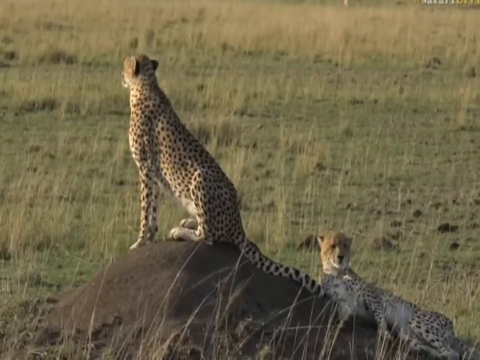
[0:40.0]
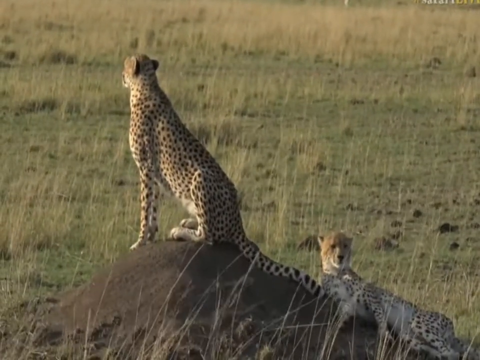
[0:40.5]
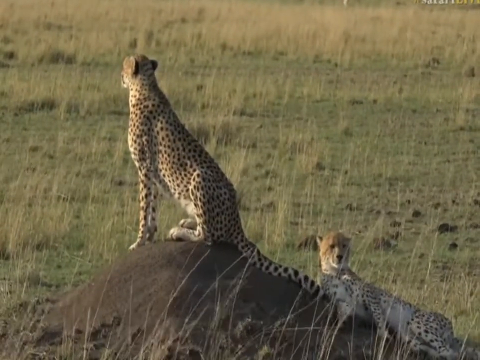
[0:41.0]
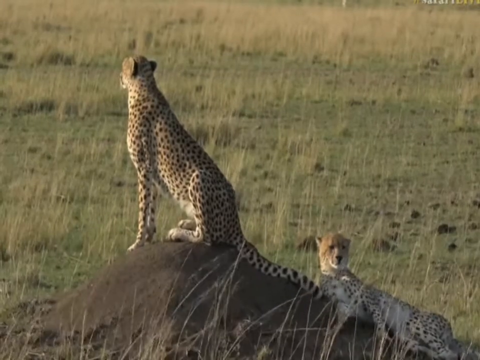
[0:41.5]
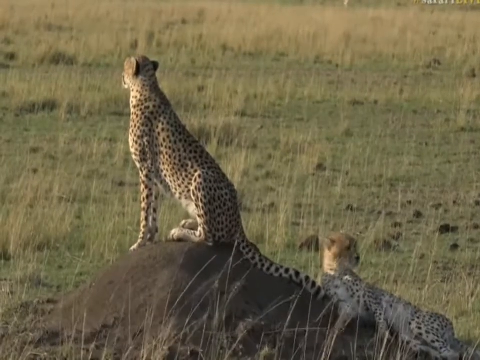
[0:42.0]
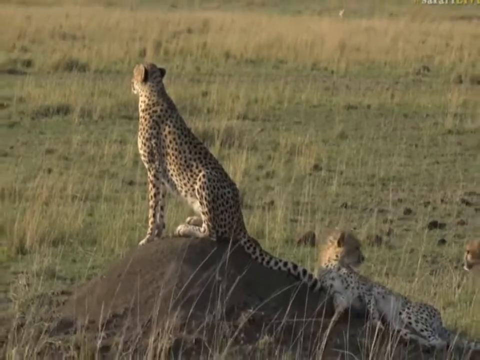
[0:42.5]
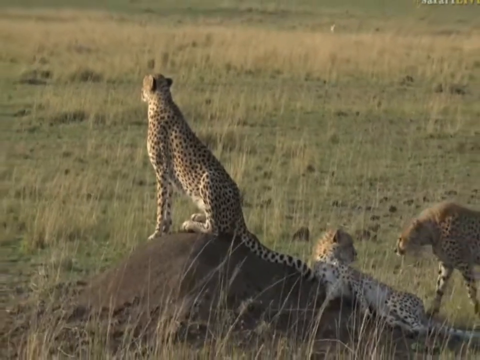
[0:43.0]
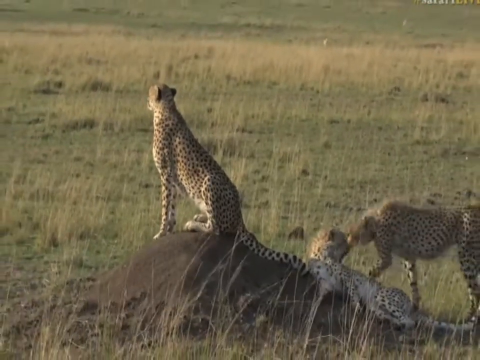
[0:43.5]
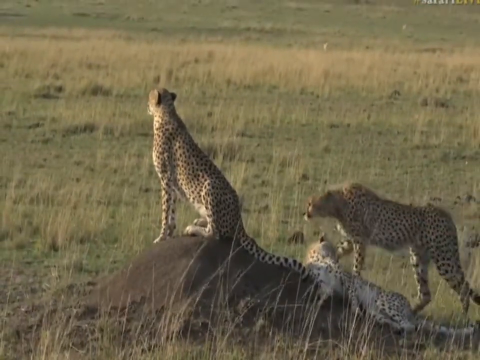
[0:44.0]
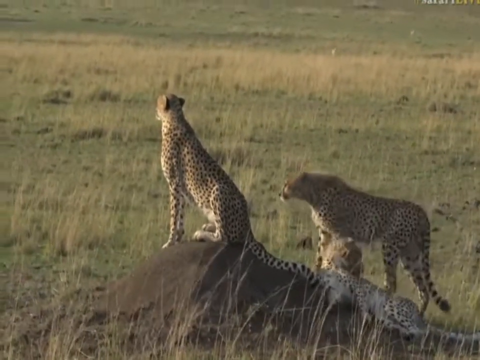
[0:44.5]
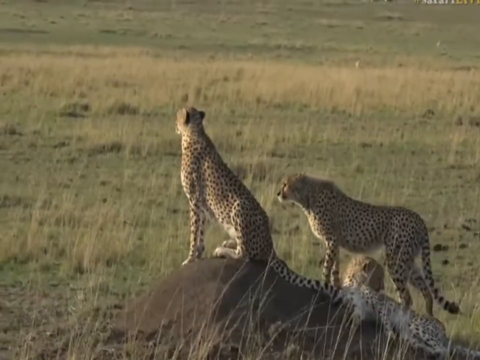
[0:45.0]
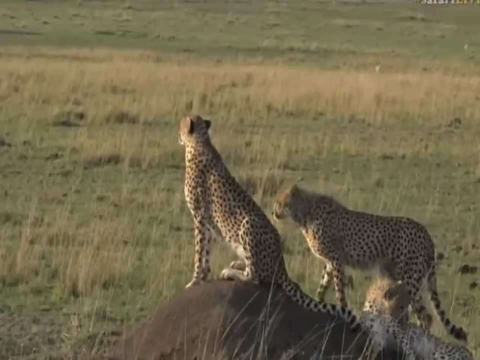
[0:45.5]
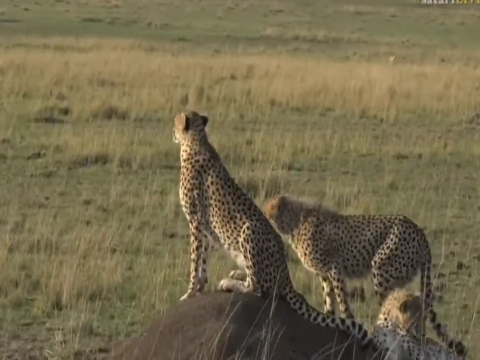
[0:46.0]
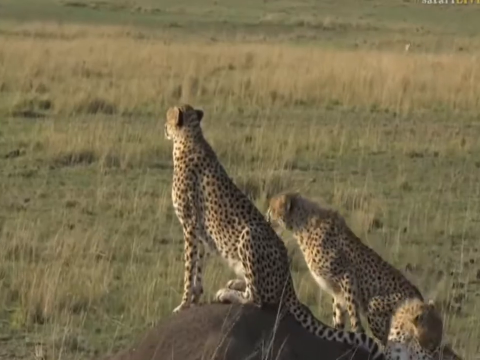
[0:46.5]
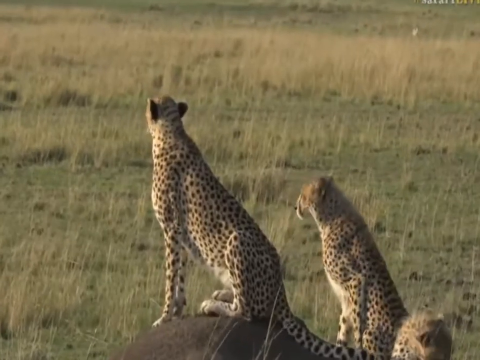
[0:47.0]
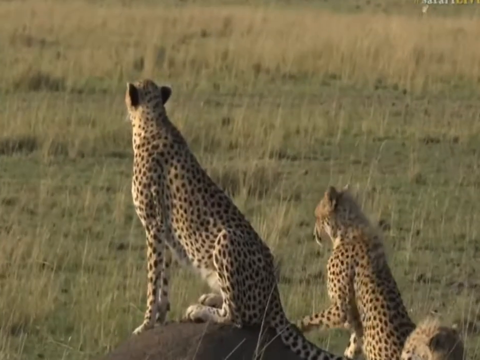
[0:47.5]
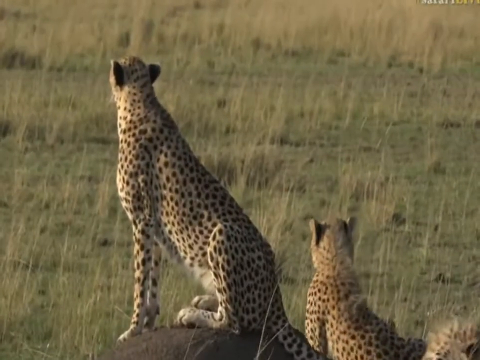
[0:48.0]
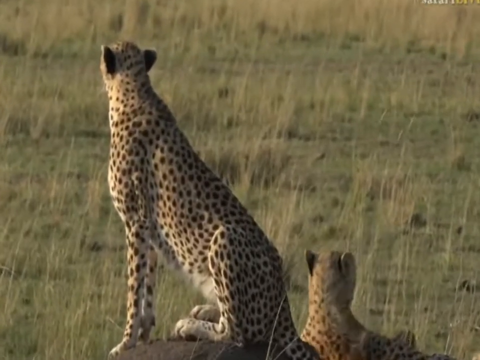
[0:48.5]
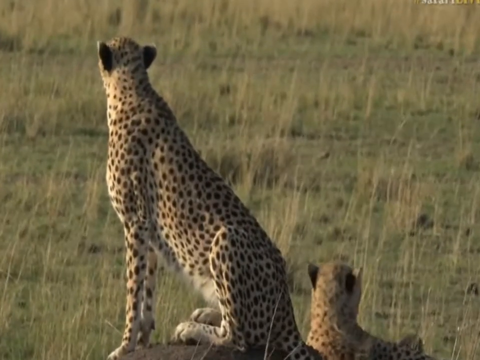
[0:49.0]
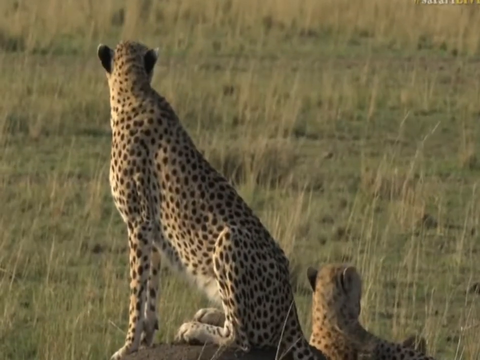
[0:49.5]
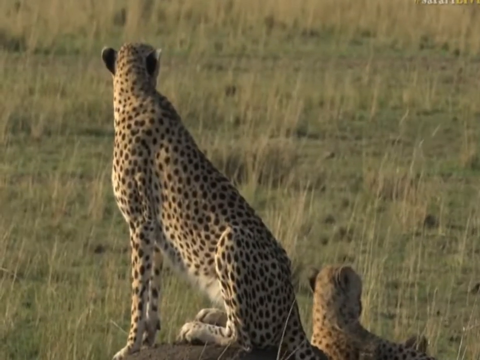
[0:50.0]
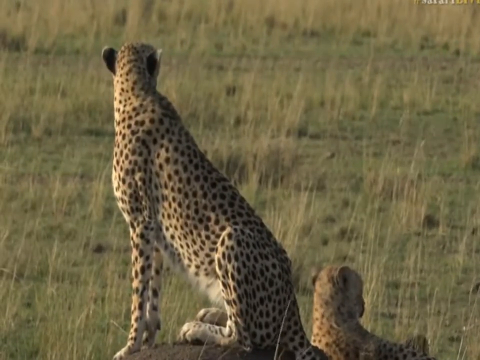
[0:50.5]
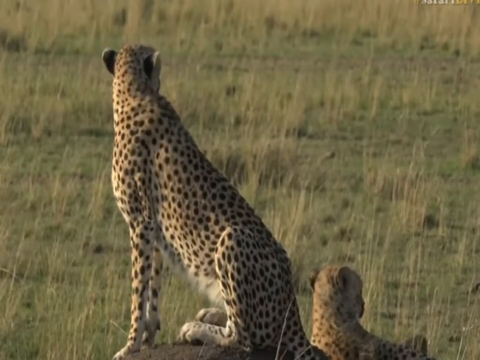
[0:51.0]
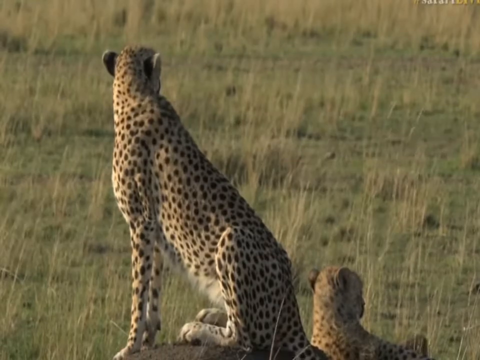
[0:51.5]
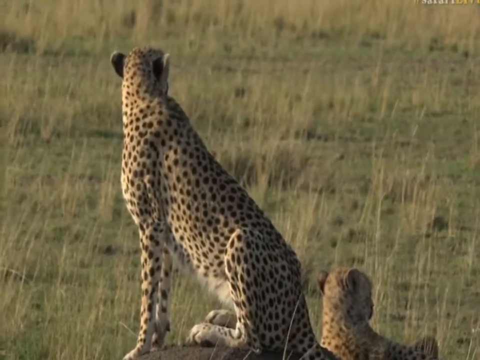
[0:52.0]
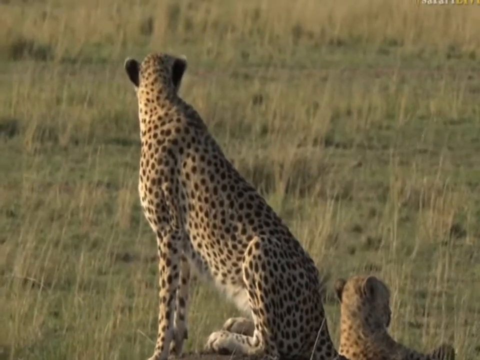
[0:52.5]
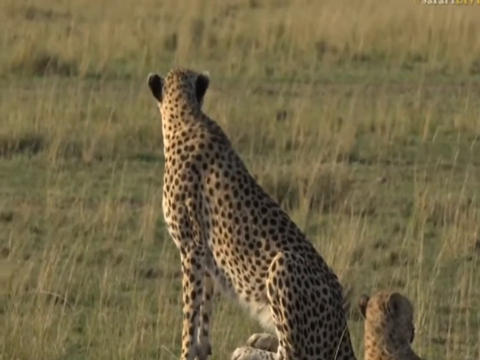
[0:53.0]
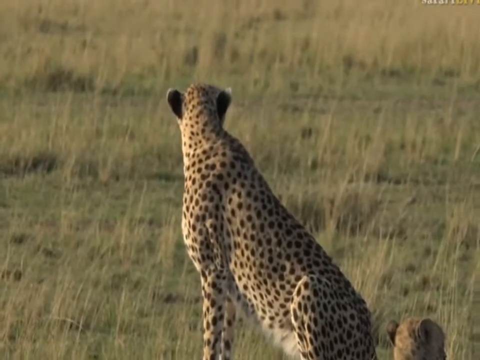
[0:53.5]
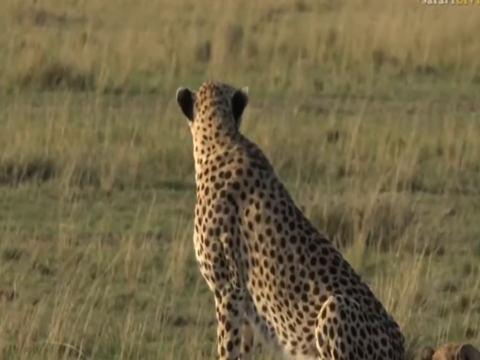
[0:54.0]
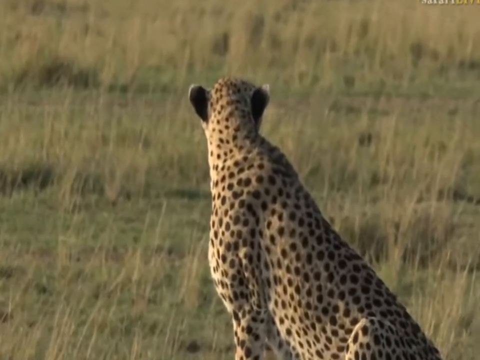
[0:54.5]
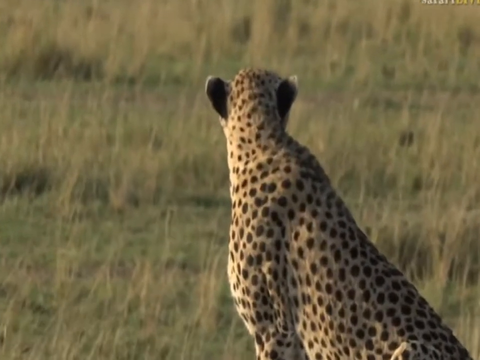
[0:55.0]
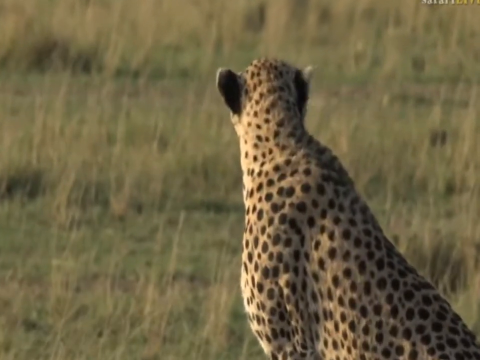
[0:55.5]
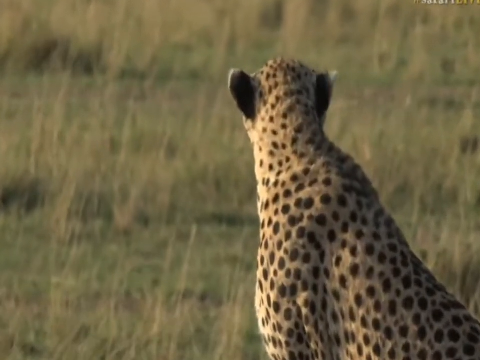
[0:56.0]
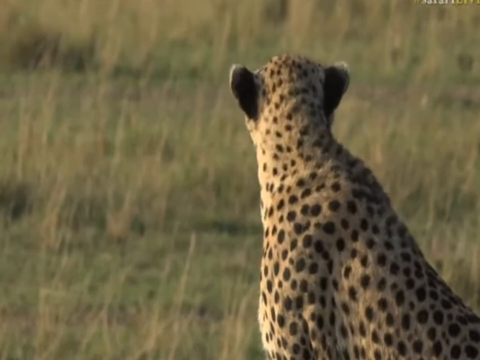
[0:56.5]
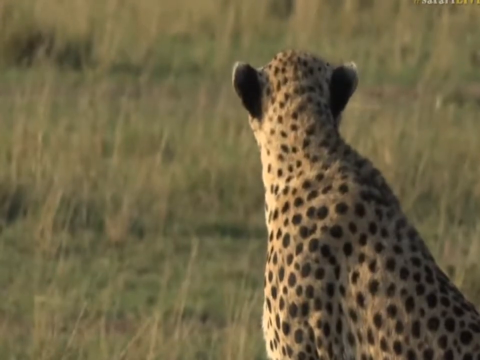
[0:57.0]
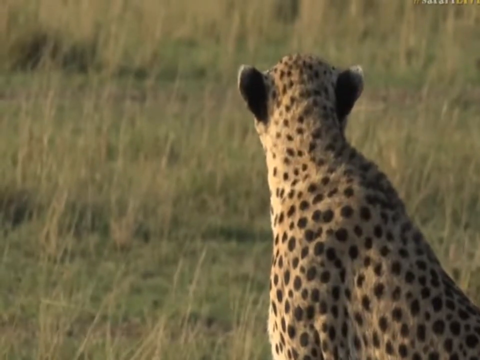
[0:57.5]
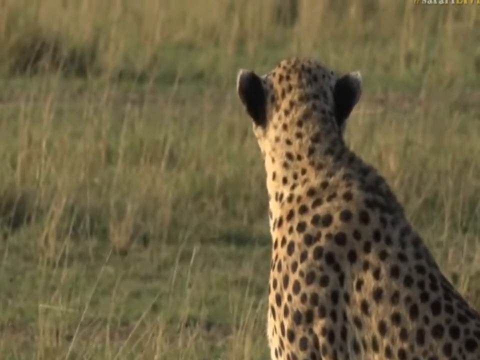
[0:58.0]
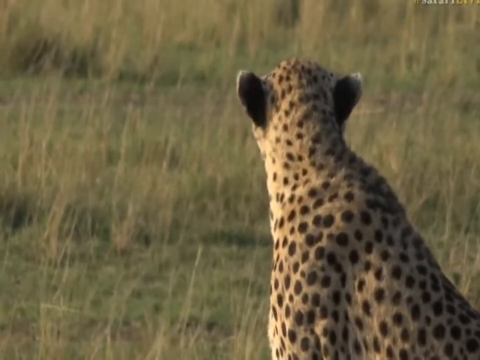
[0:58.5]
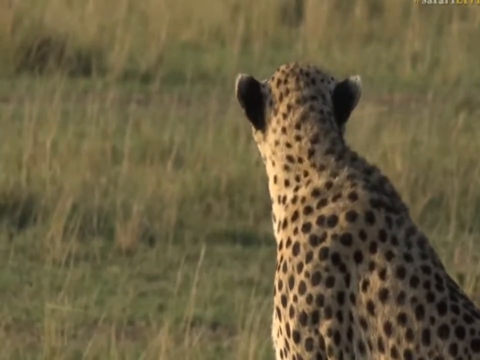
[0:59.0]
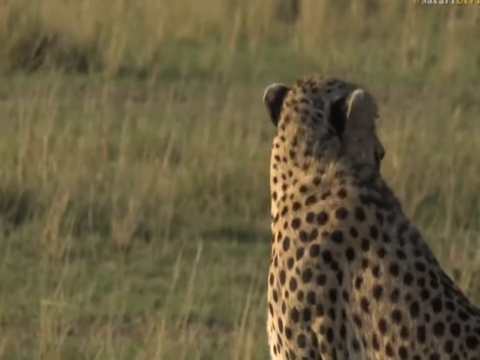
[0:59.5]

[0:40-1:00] The leopard is still sitting at the top of the hill, and the original leopard lies to the right side, leaning against the hill and looking around. A leopard that had been left behind earlier walks over slowly, sniffs the leopard lying on the ground, walks past it a bit up the hill, and sits down, then also lies there behind the little hill where the other leopard is sitting, still looking around. The leopard sitting on top of the hill faces away from the camera, so the back of its head is visible. Its ears perk up a bit, and its right ear twitches slightly, possibly from the wind. The leopard then turns toward the right side before the shot cuts, showing the leopards lounging on the little hill with the one at the top sitting and looking.